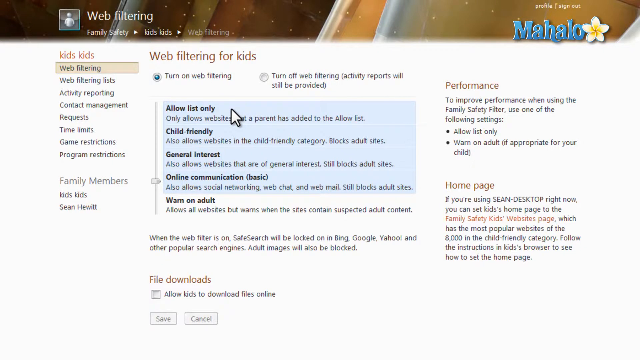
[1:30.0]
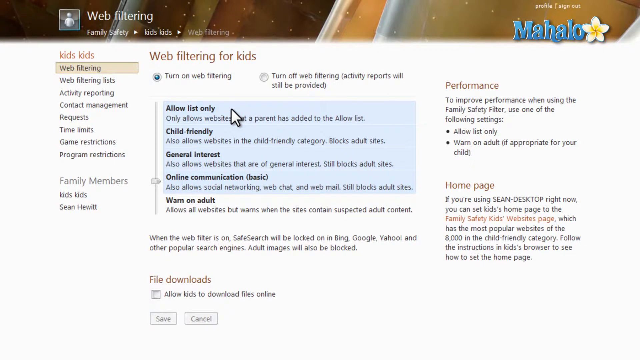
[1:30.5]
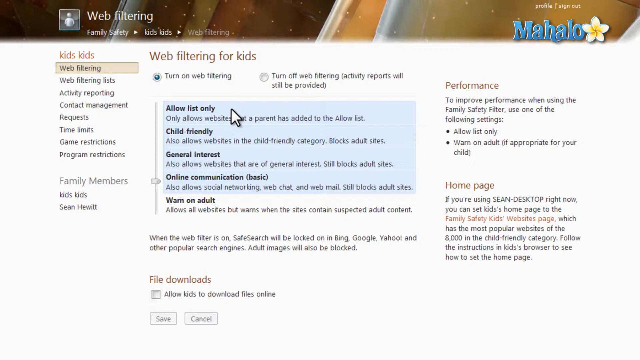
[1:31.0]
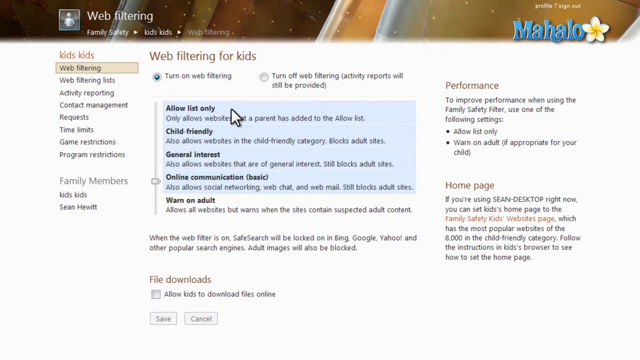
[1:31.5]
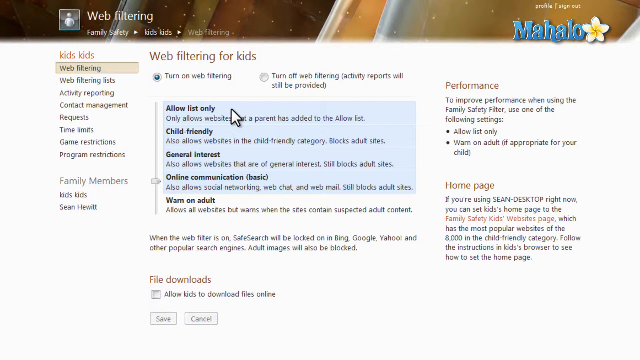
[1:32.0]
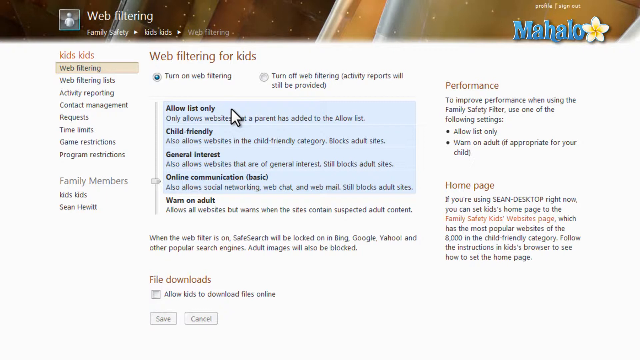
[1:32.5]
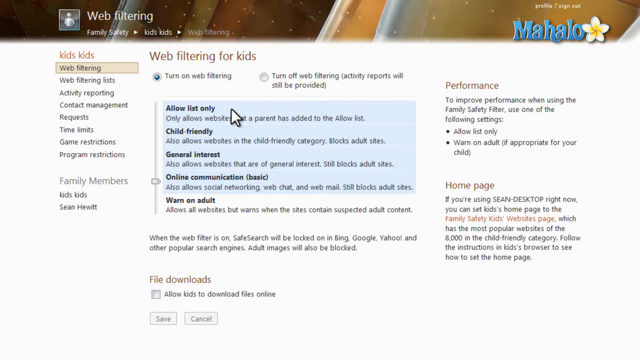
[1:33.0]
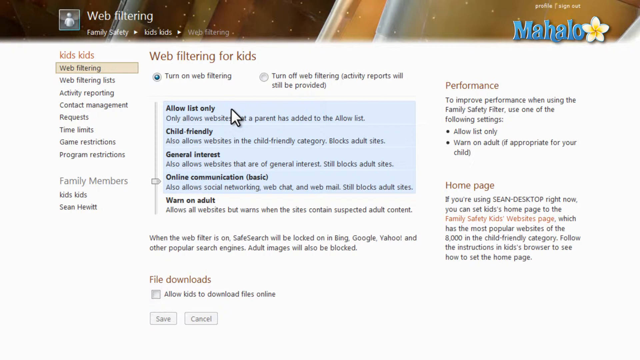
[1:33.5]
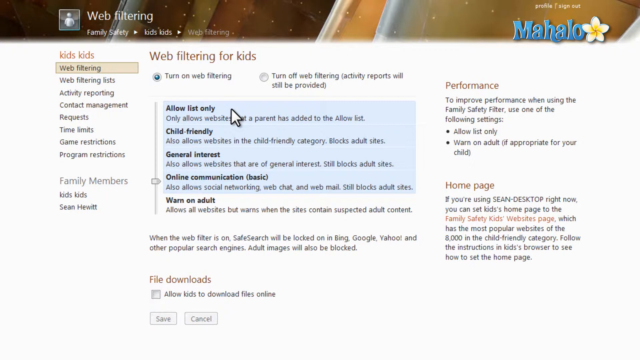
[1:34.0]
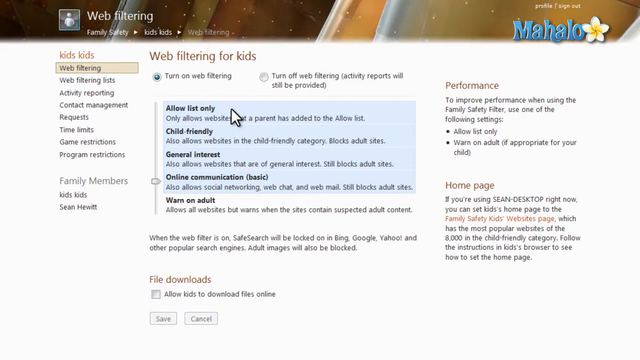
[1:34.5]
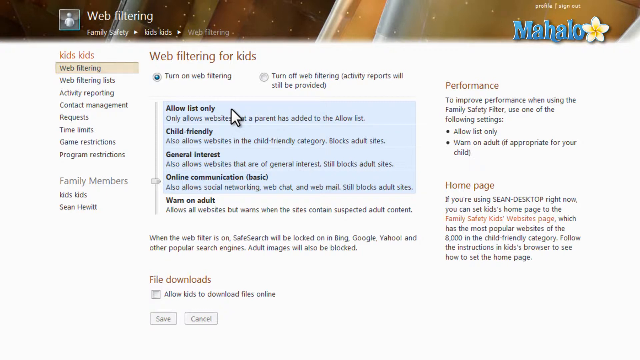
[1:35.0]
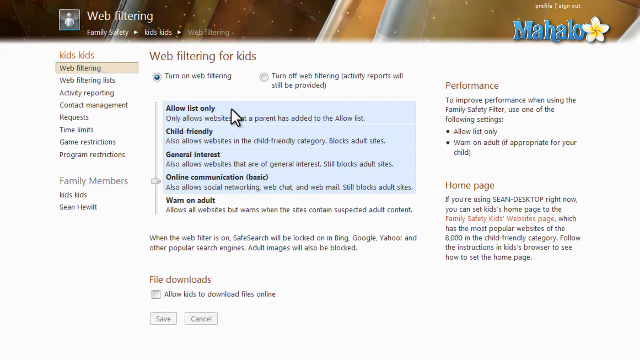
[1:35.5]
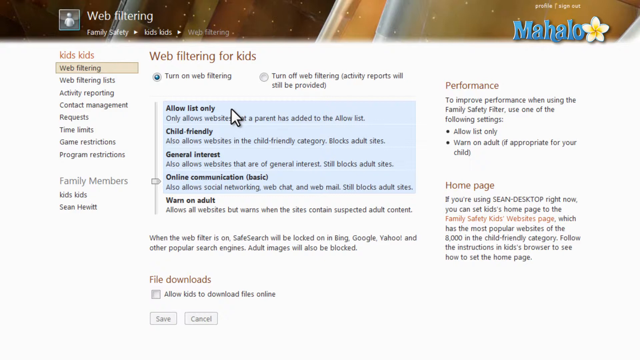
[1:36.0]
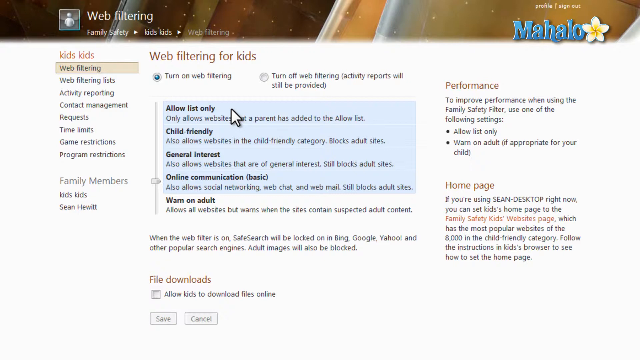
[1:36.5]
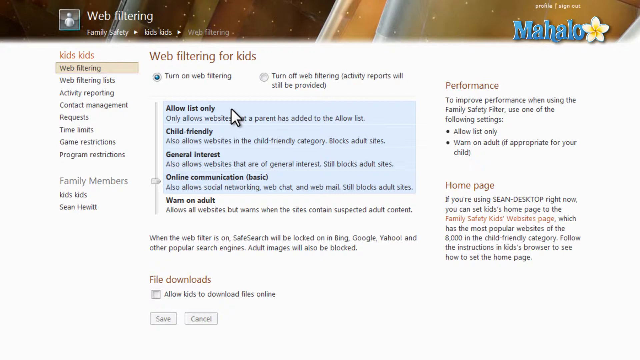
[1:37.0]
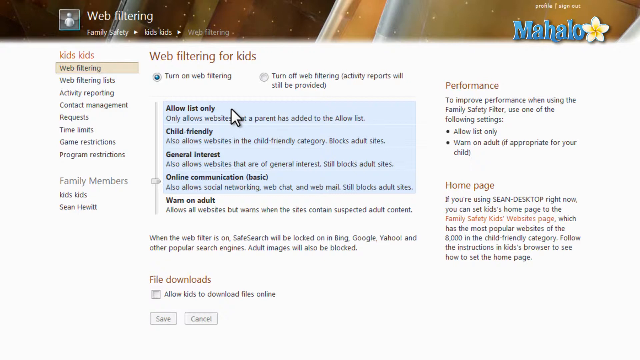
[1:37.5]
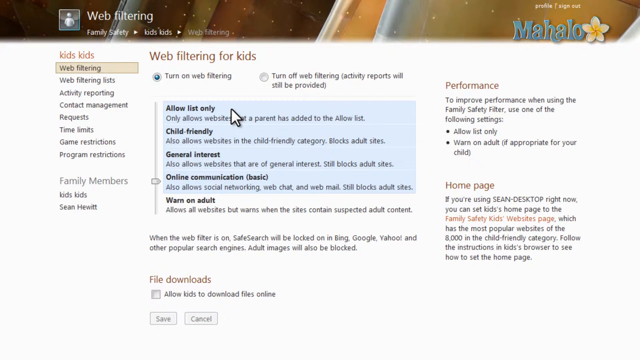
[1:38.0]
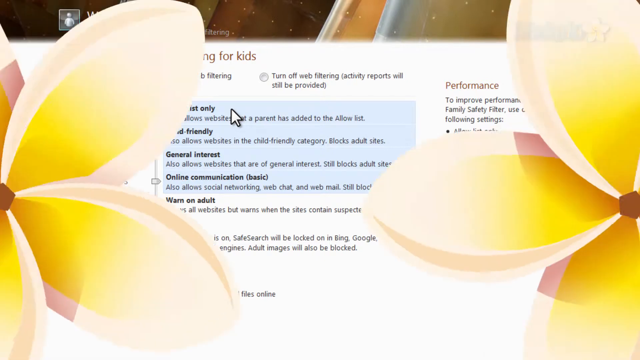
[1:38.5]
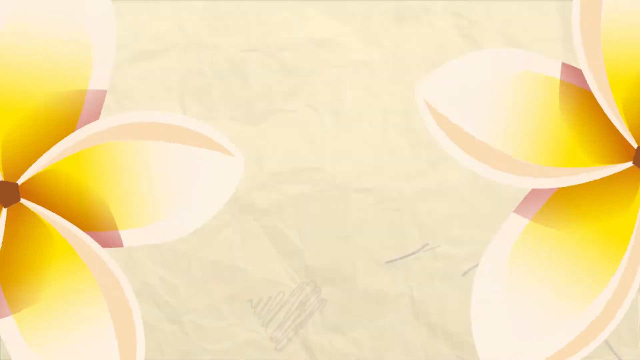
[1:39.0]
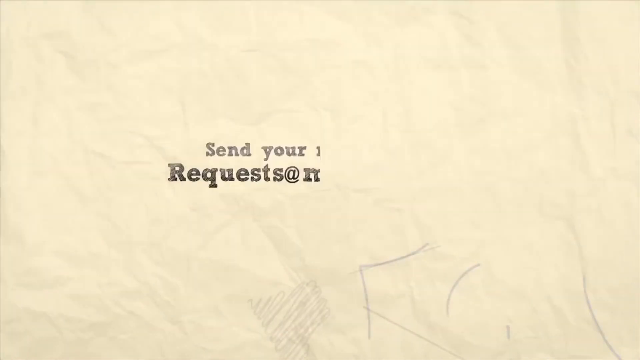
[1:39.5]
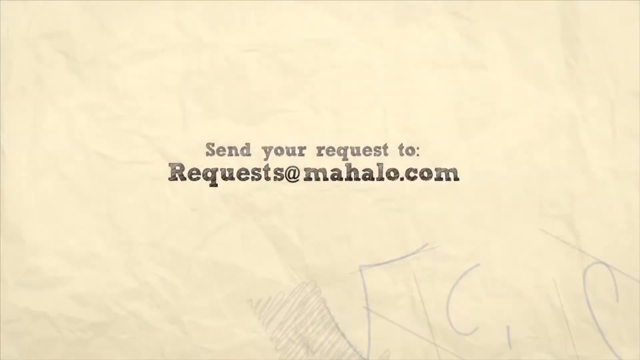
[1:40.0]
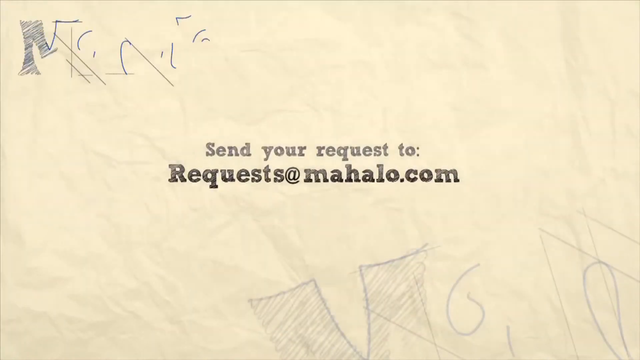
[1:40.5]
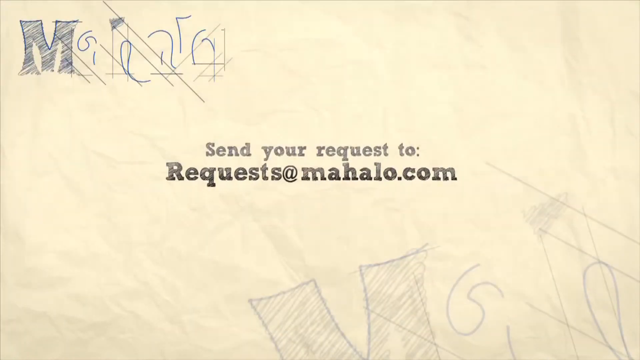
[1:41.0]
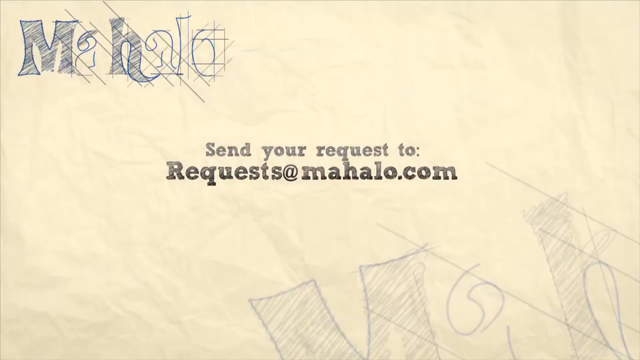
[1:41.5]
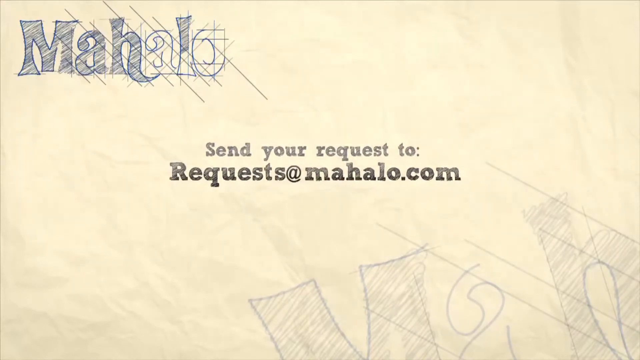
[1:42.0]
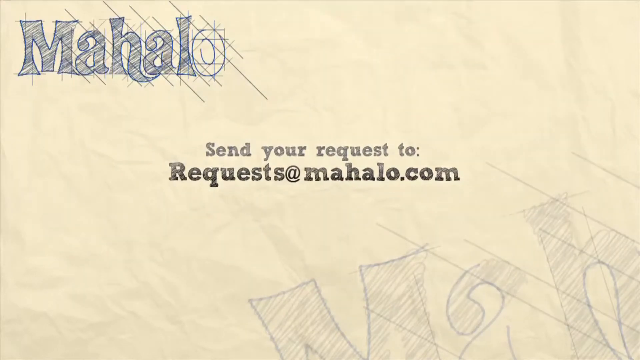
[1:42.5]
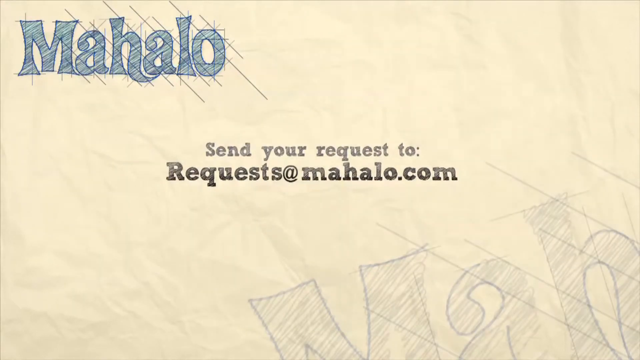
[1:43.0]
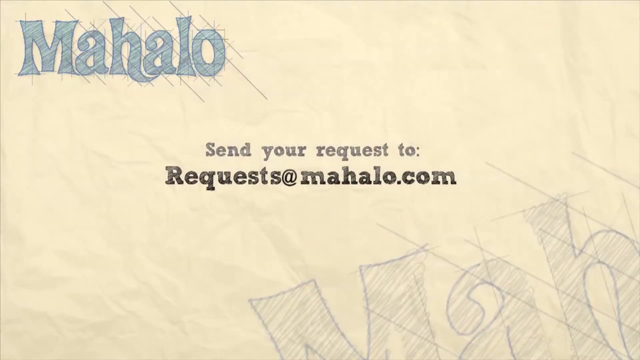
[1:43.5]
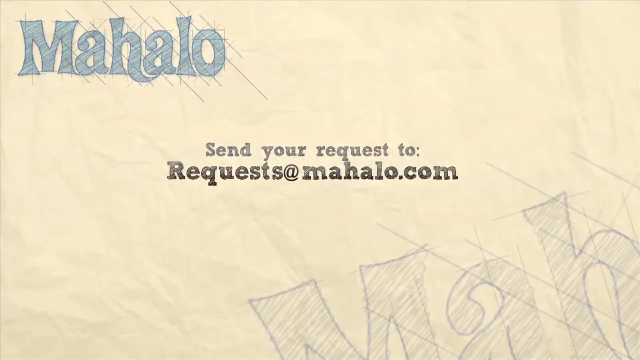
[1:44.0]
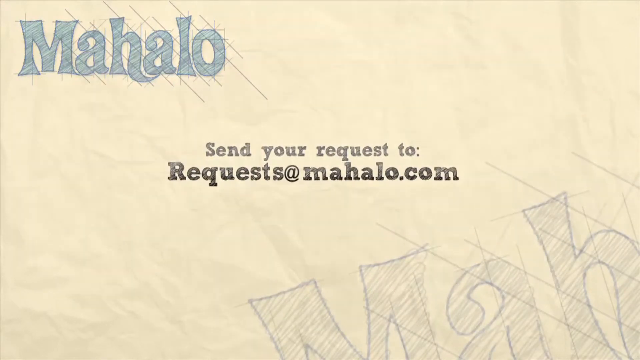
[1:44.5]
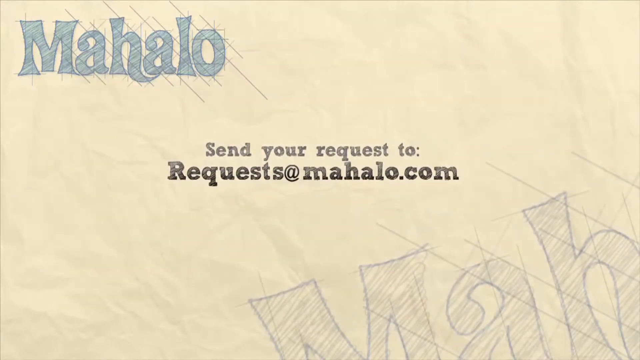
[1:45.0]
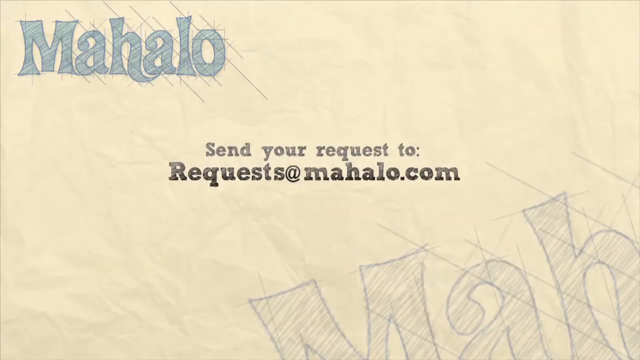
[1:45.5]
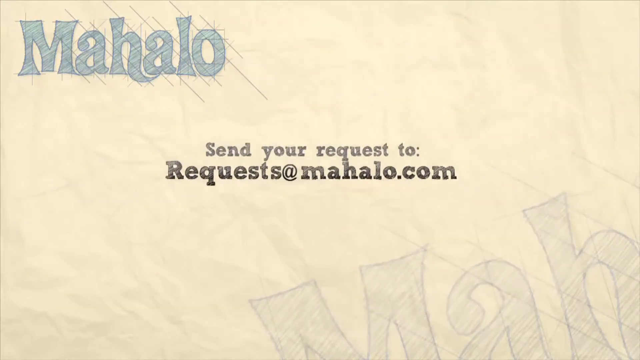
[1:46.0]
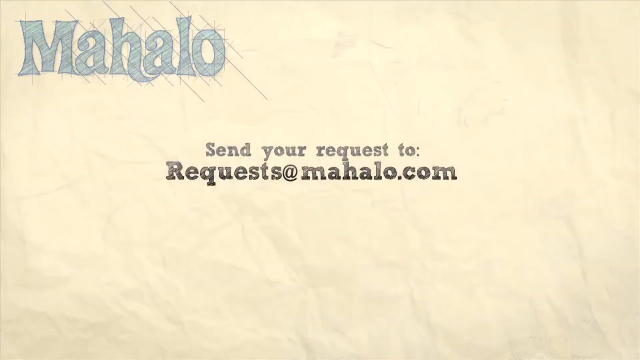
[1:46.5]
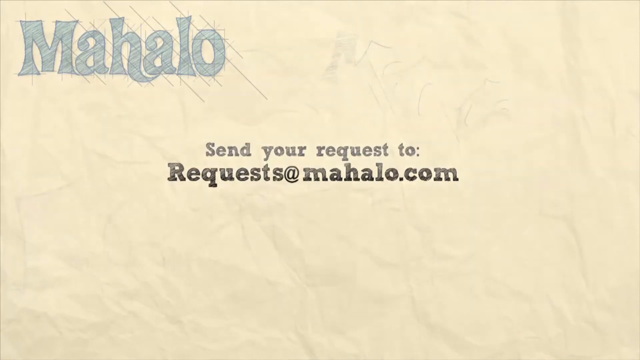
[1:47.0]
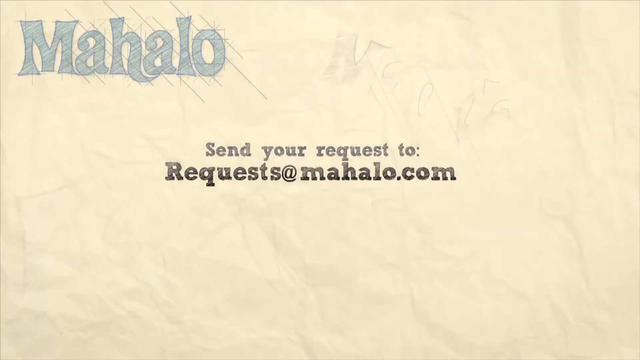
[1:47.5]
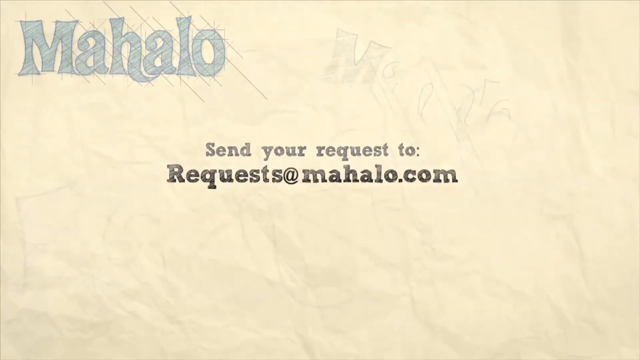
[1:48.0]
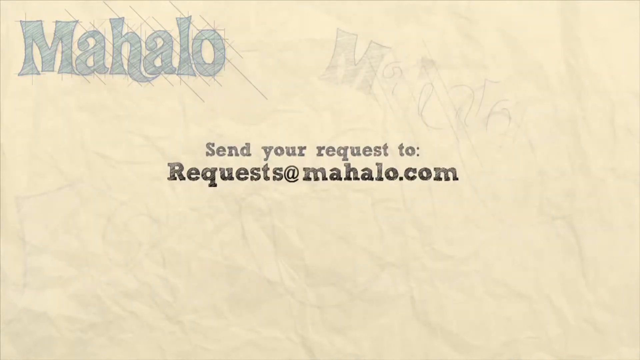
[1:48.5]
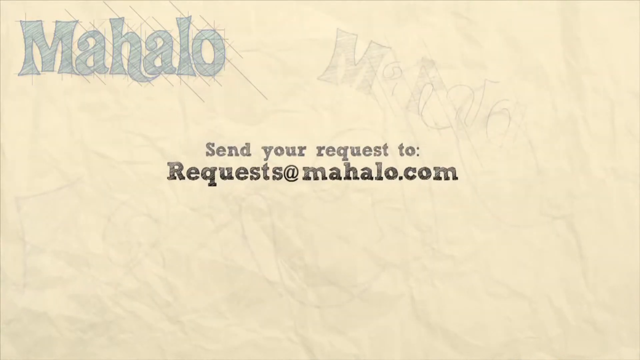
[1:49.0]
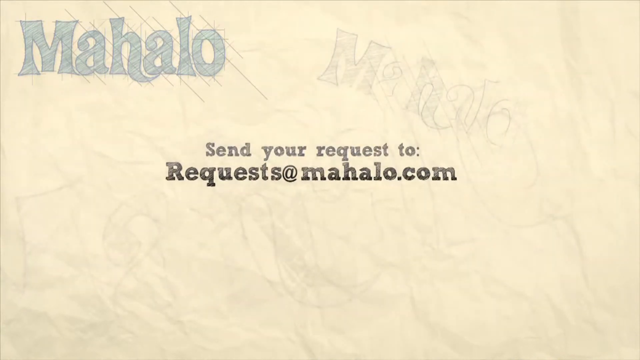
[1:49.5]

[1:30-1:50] A colored banner runs across the very top of the page, with browns and oranges going up and down. At the top left is a small white-bordered box containing a little white figure, similar to the earlier family picture. To its right it reads "Web Filtering", with what appear to be collapsible arrows: "Family Safety", an arrow, "Kids Kids", and then "Web Filtering", the current page. At the far right is "Mahalo" in blue, and to the right of that a white flower with five round petals and yellow in the middle. The page then goes away as animated yellow flowers crisscross across the screen, wiping it away. A wrinkled beige paper appears, with the Mahalo text effect at the top left, blue in the middle. It reads "send your request to request a Mahalo", all shaded and moving around a little. Another "Mahalo" appears very large and diagonally, with only the M, A and H visible.